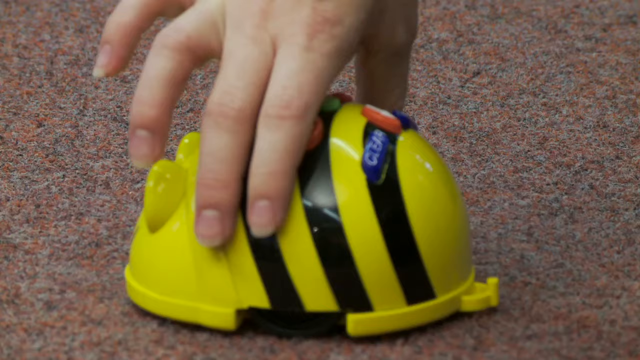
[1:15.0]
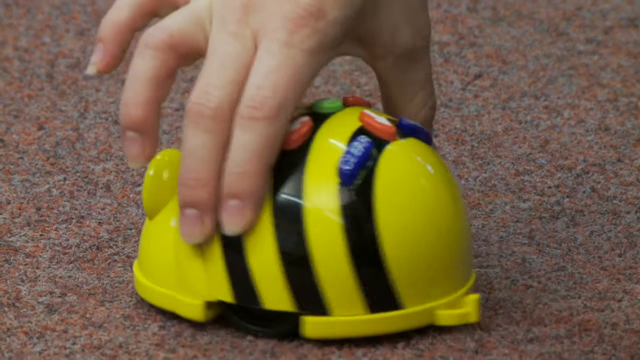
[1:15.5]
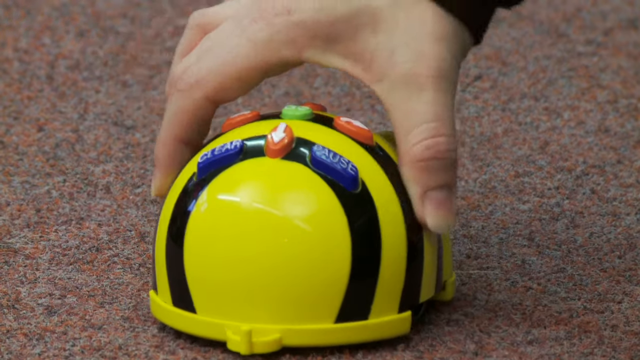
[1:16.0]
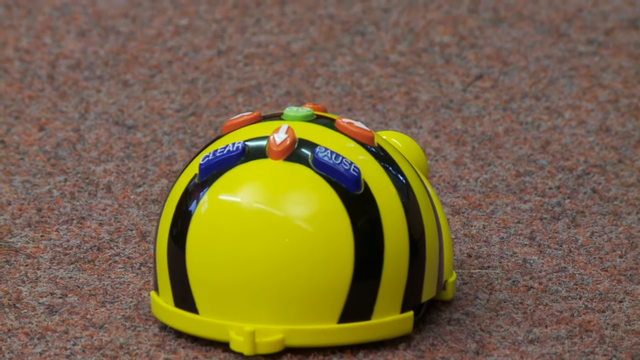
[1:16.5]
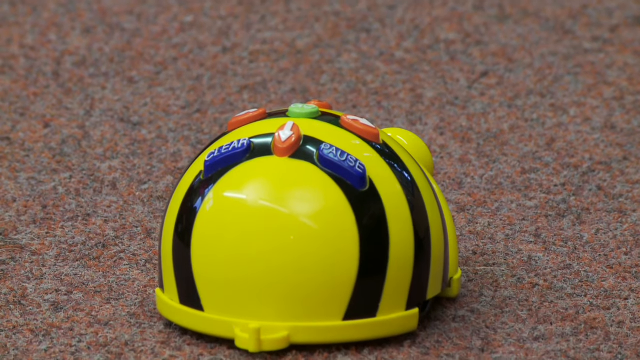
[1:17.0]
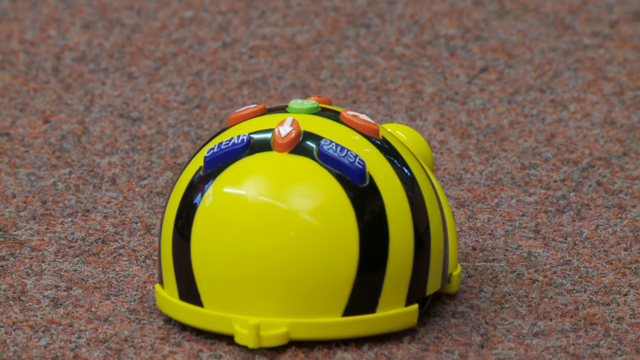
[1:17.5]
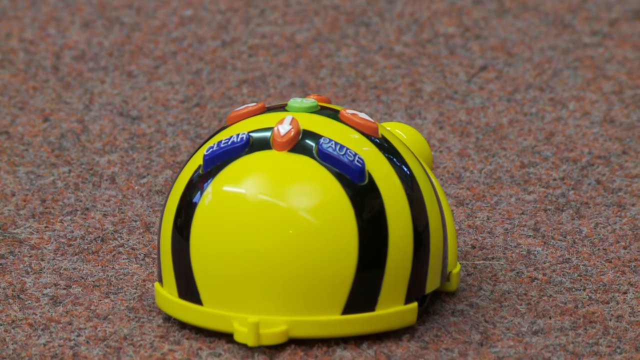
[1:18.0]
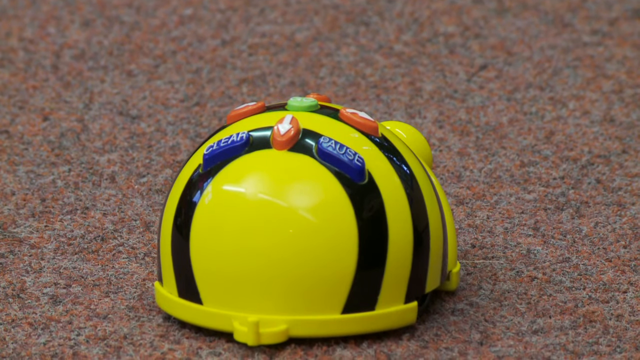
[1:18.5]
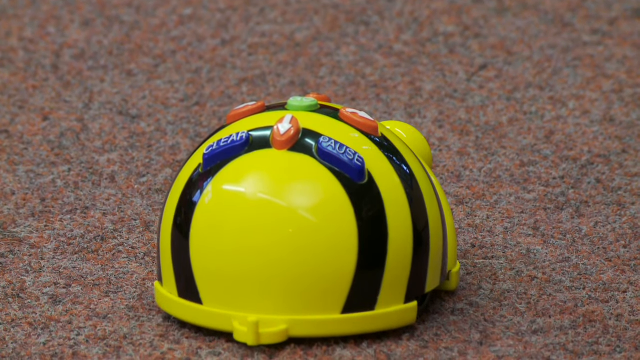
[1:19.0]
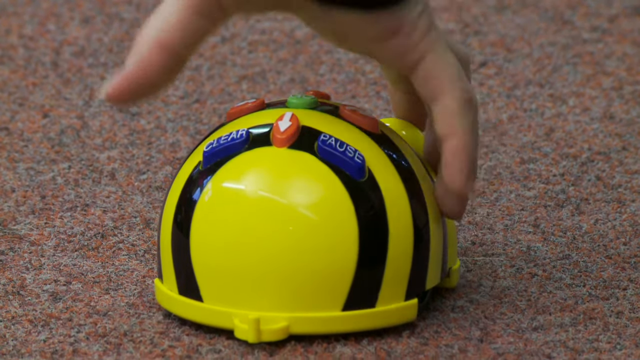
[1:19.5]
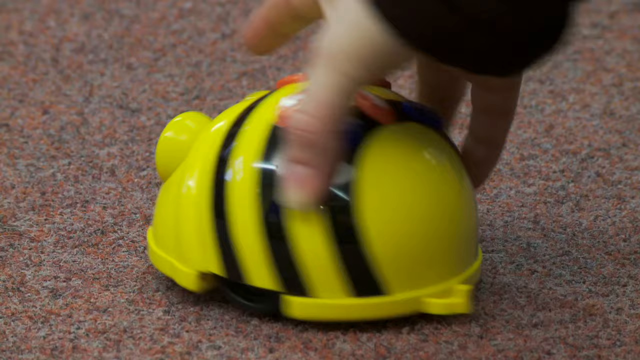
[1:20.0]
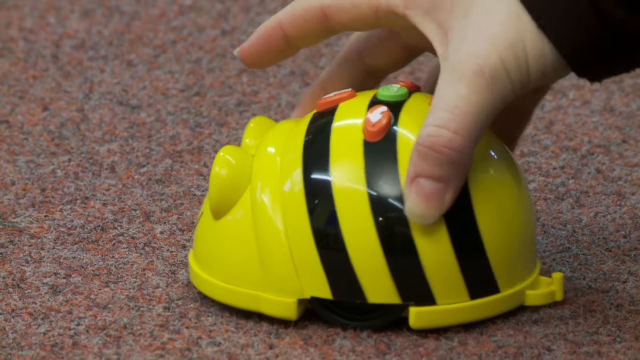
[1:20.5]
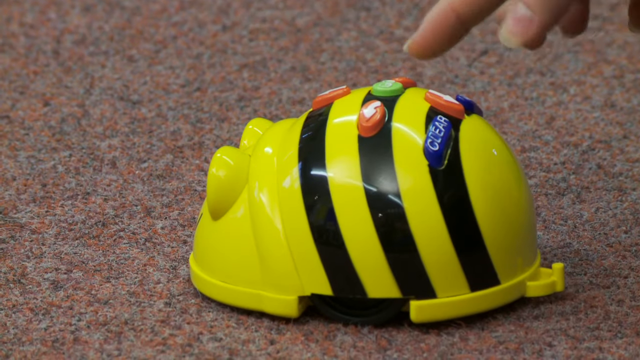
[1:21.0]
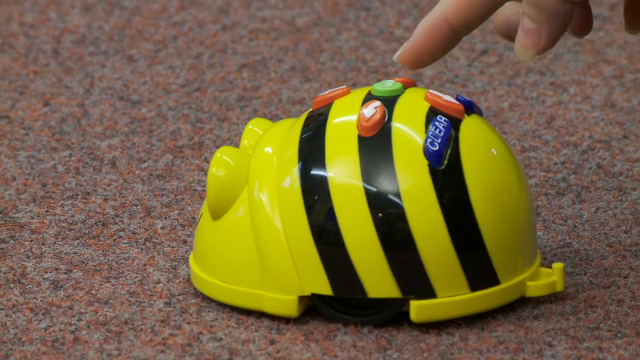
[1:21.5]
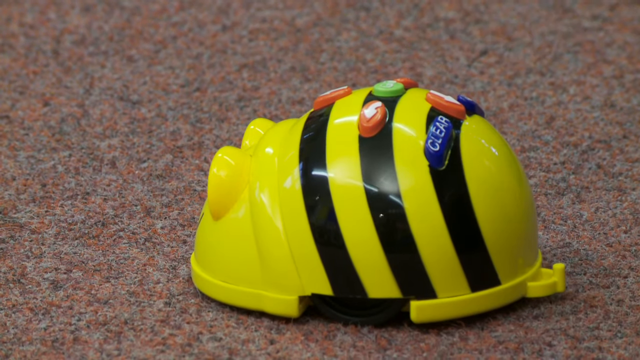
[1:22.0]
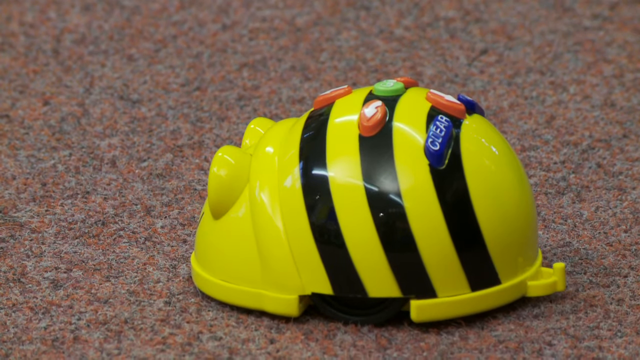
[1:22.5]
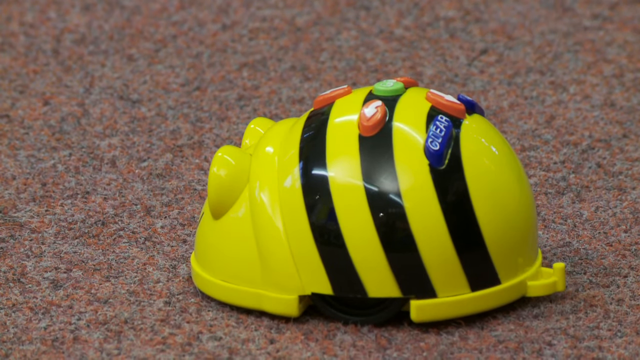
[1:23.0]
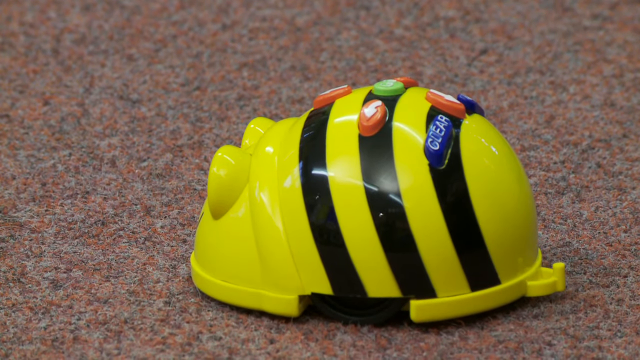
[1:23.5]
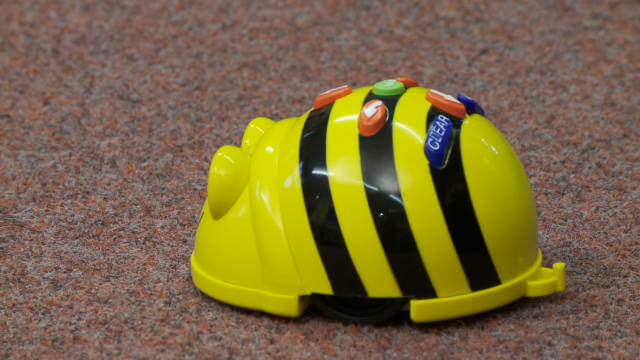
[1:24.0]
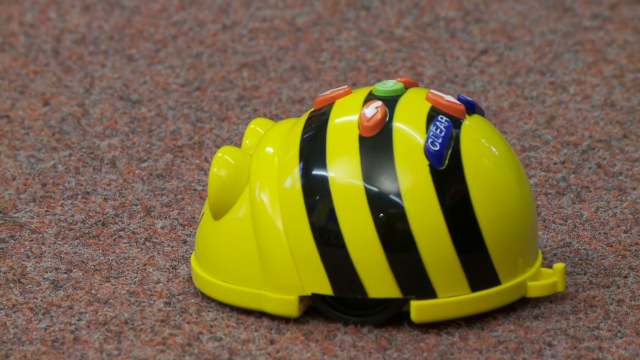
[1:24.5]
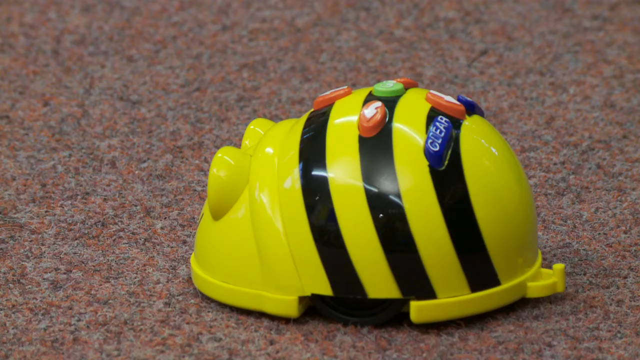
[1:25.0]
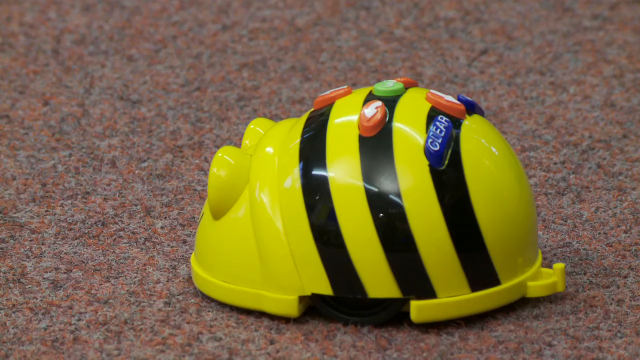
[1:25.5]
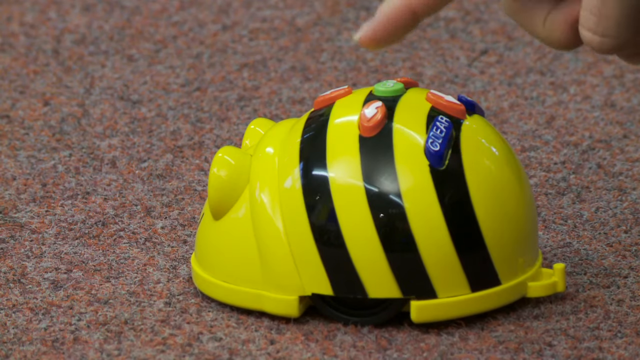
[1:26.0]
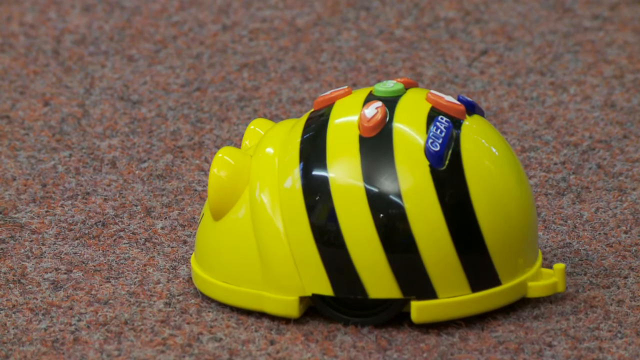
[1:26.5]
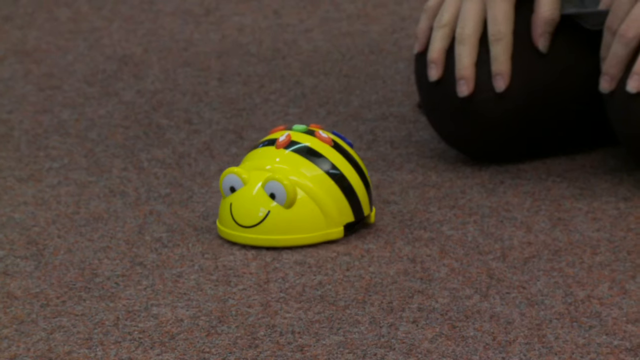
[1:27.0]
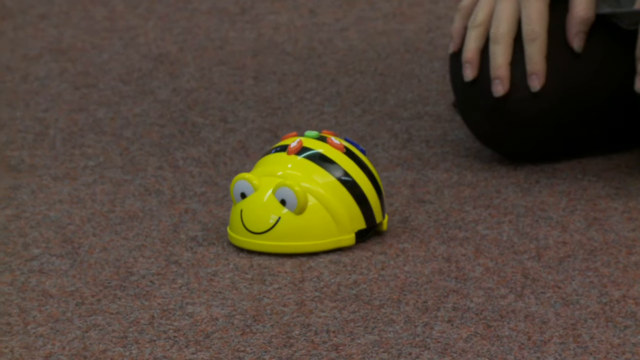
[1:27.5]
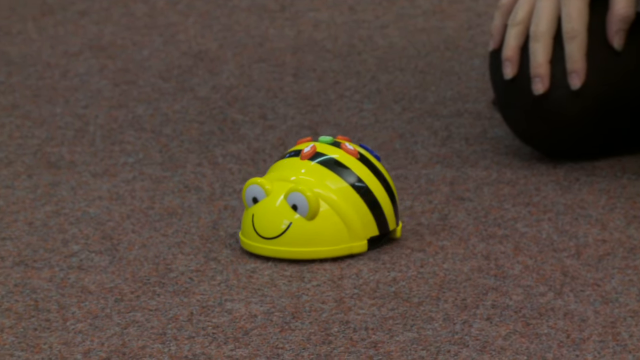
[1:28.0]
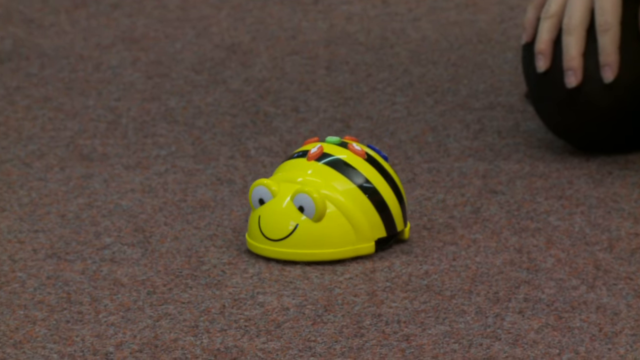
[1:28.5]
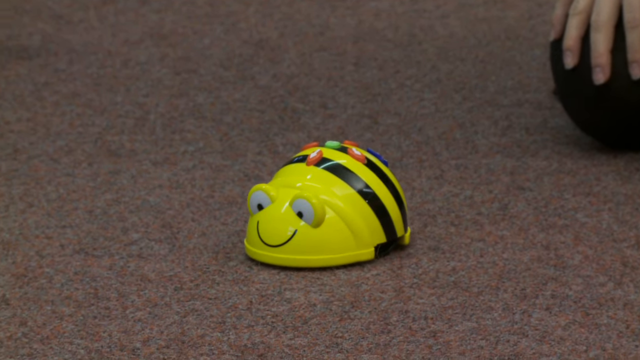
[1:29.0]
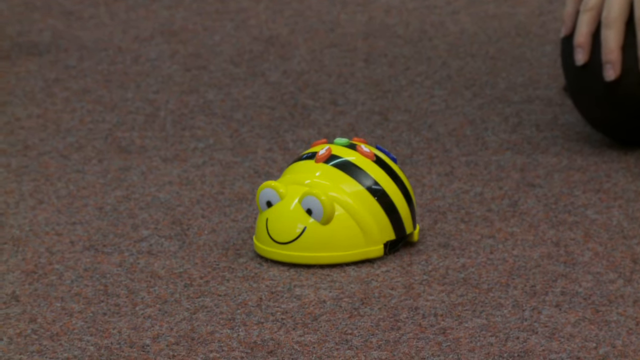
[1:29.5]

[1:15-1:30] The instructor turns the robot one way and then turns it back another way. She first selects an orange directional button and then the green button on the very top of the bee bot. When she selects the green button, the robot lights up its eyes and starts moving in the direction it is facing. The robot is a large, shell-shaped plastic toy with black stripes over its body to mimic a bee. It has very large eyes, much like frog eyes, that light up when buttons are selected, and a generic happy face painted on the front.